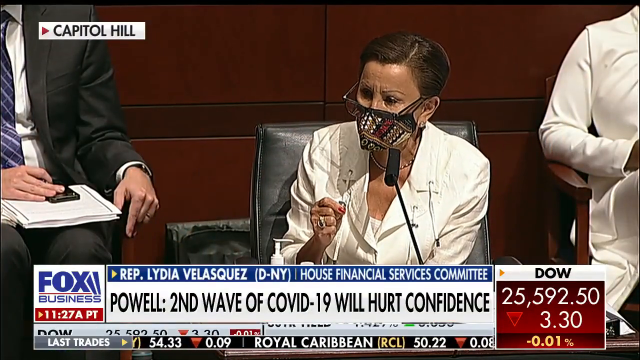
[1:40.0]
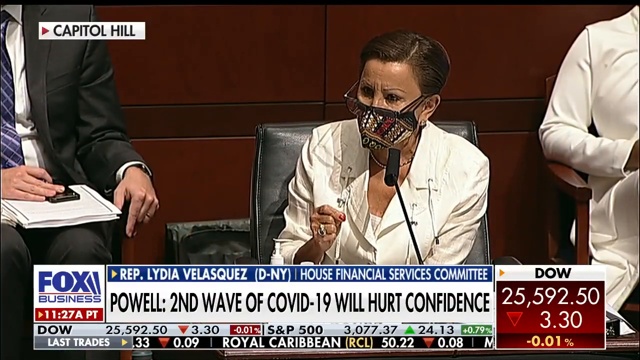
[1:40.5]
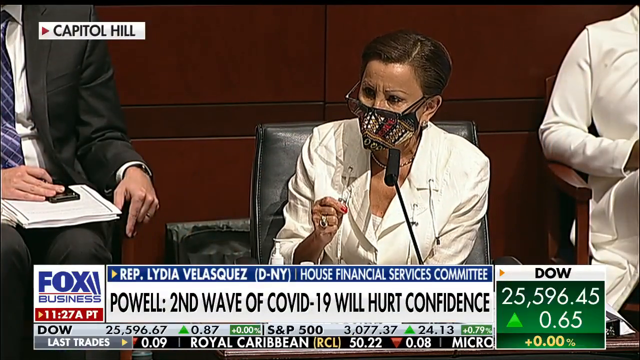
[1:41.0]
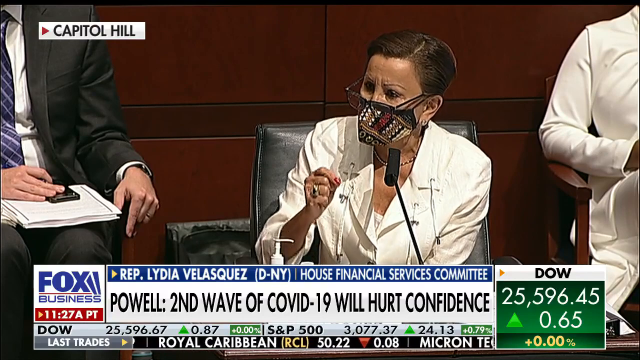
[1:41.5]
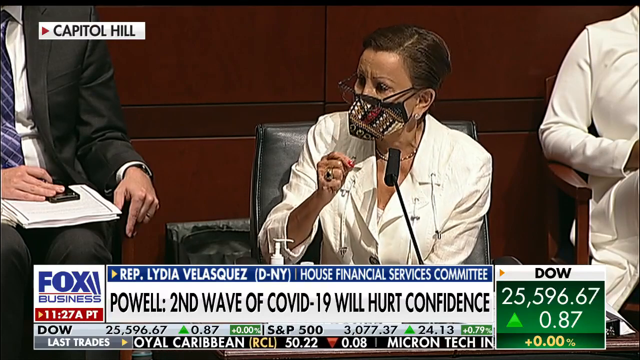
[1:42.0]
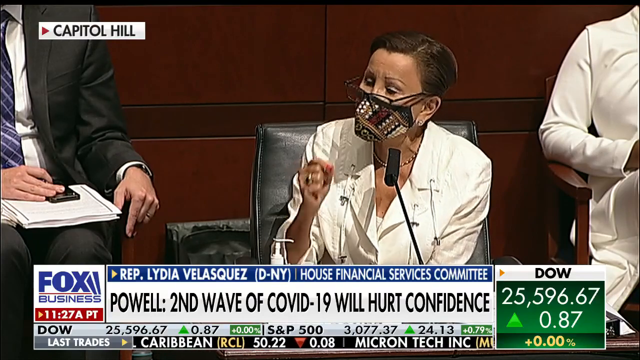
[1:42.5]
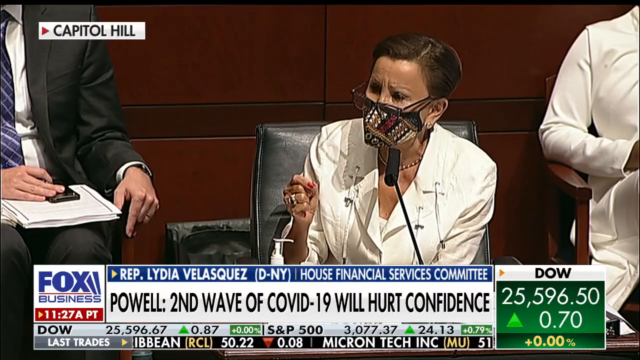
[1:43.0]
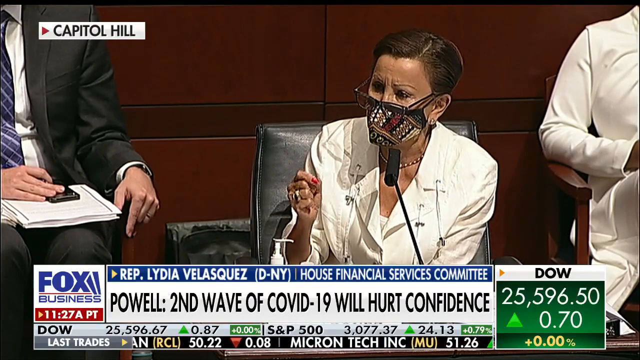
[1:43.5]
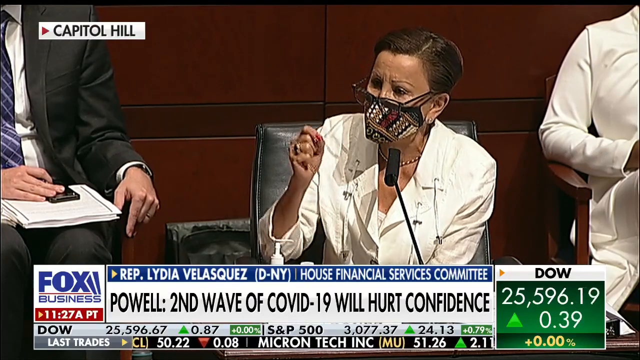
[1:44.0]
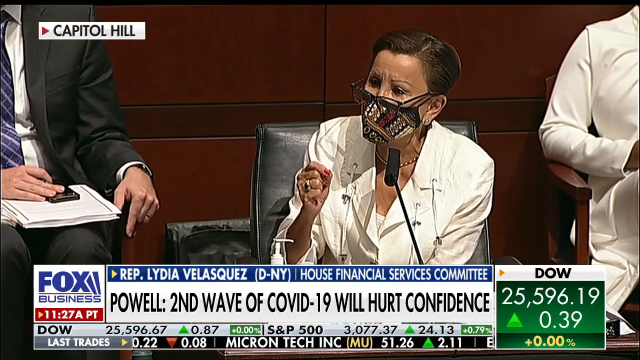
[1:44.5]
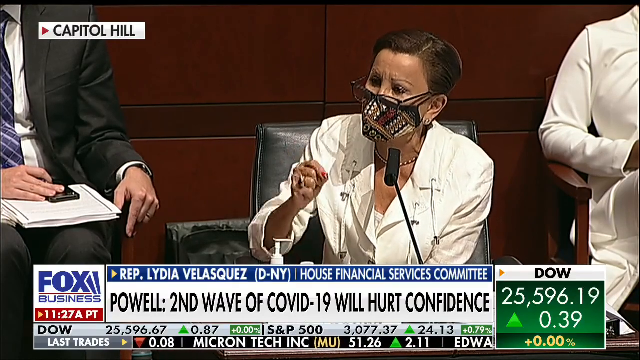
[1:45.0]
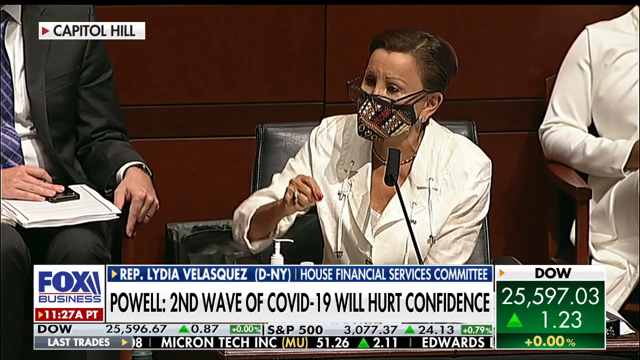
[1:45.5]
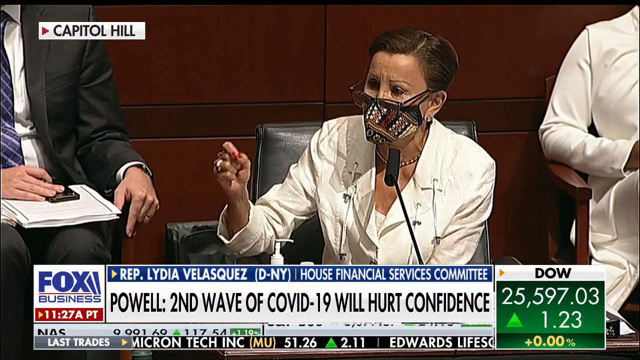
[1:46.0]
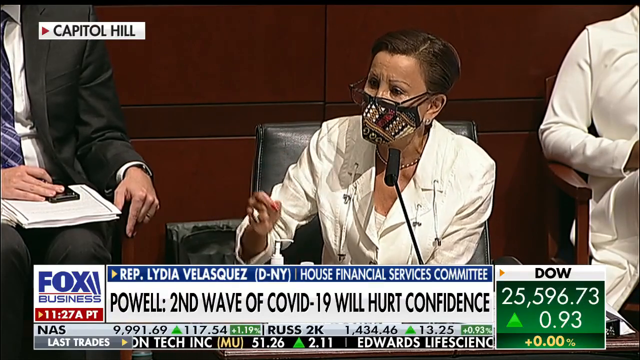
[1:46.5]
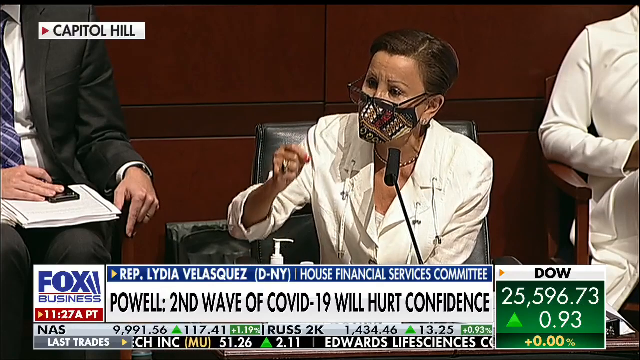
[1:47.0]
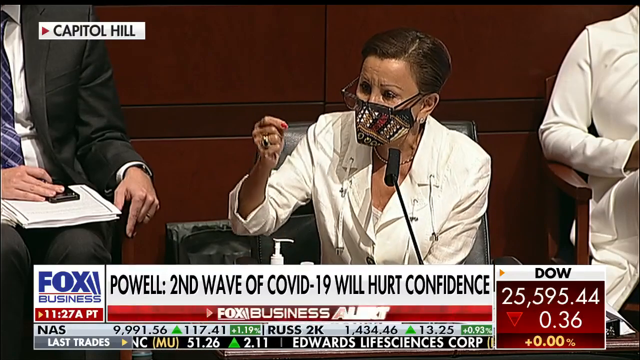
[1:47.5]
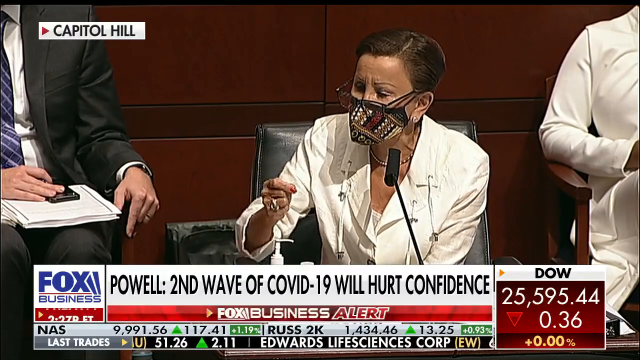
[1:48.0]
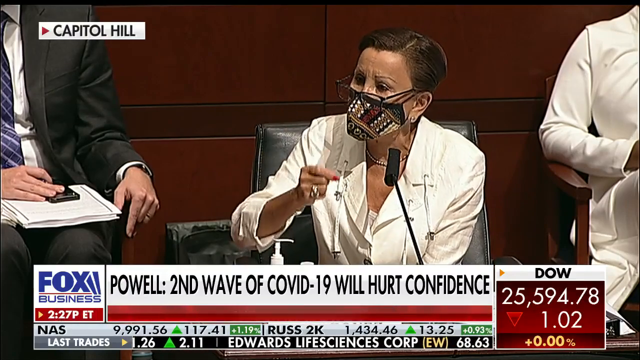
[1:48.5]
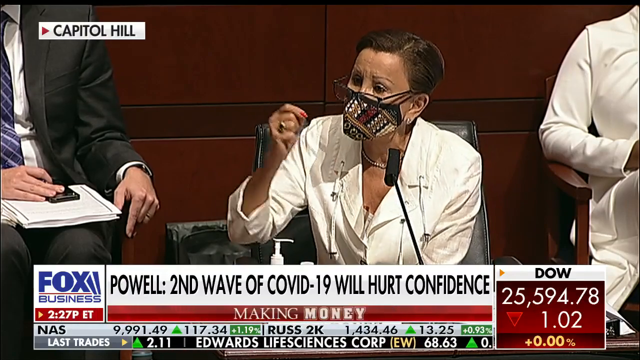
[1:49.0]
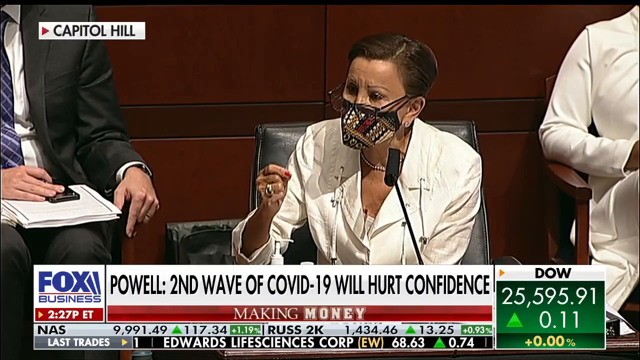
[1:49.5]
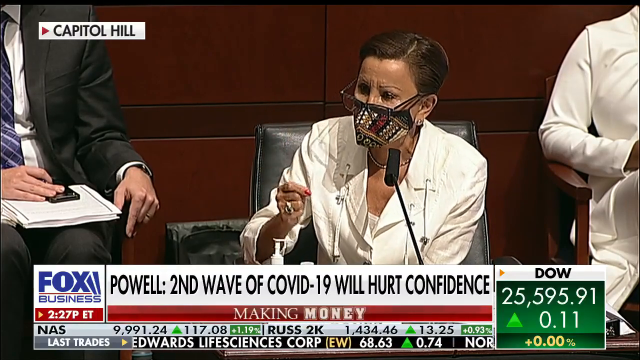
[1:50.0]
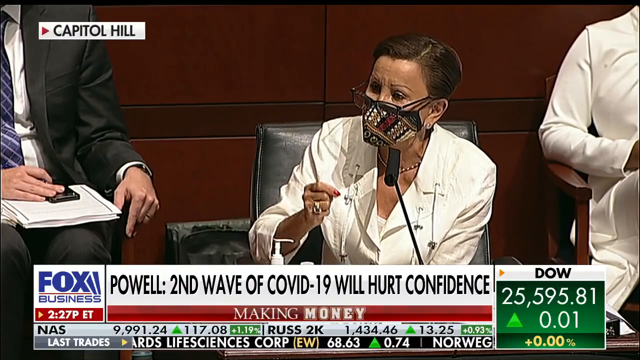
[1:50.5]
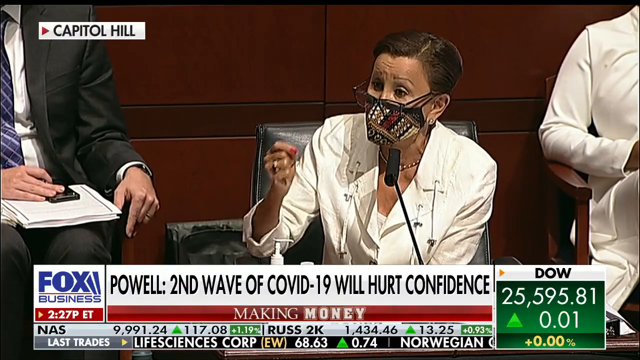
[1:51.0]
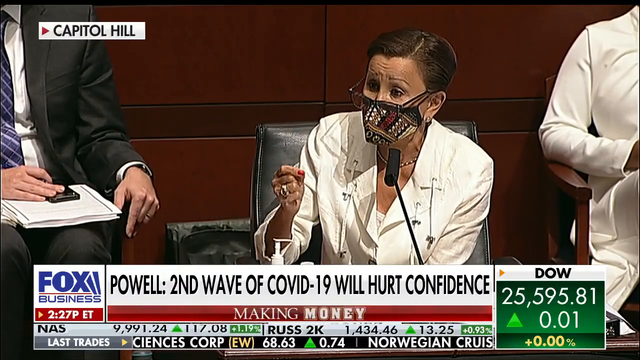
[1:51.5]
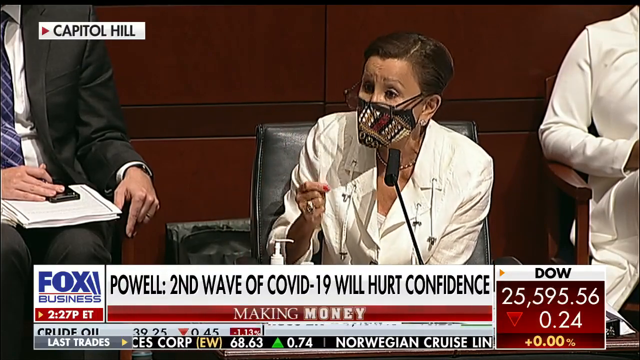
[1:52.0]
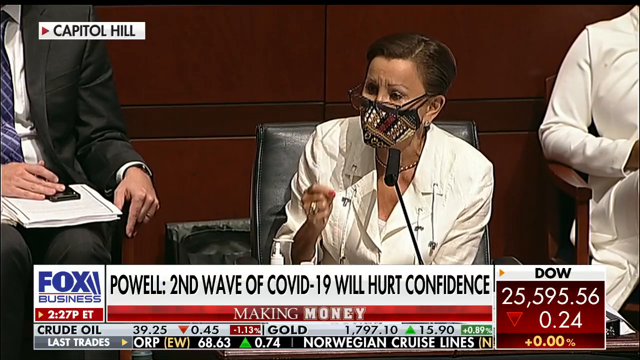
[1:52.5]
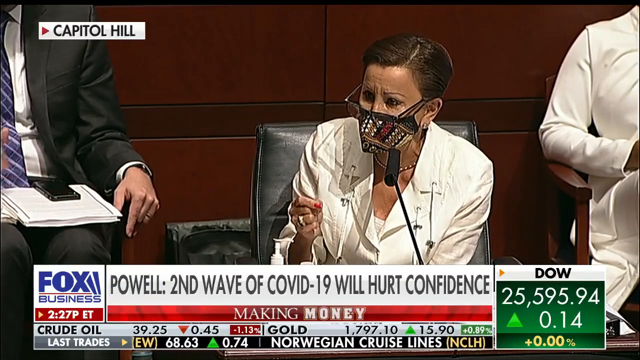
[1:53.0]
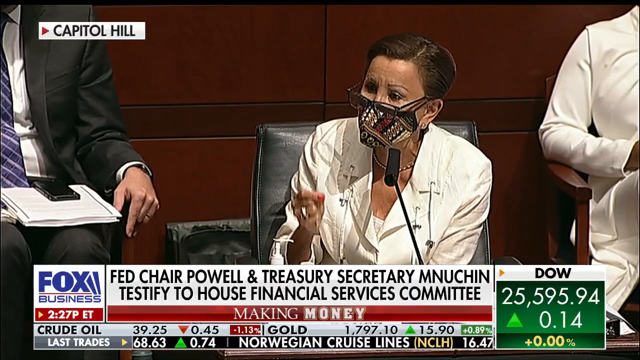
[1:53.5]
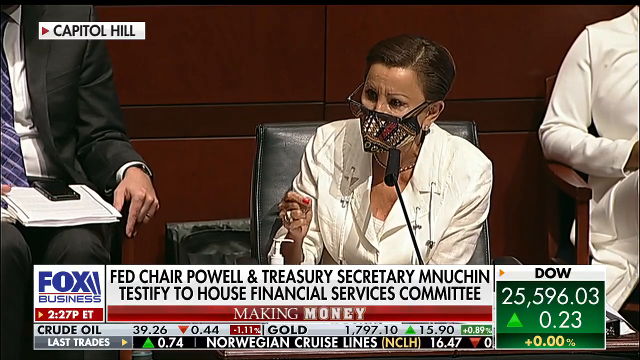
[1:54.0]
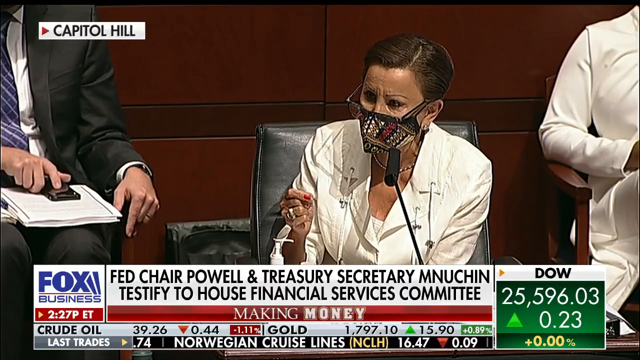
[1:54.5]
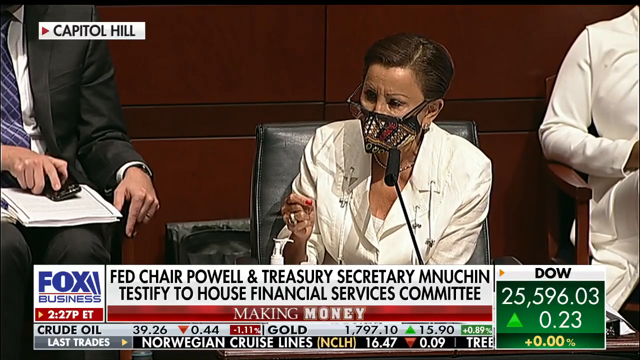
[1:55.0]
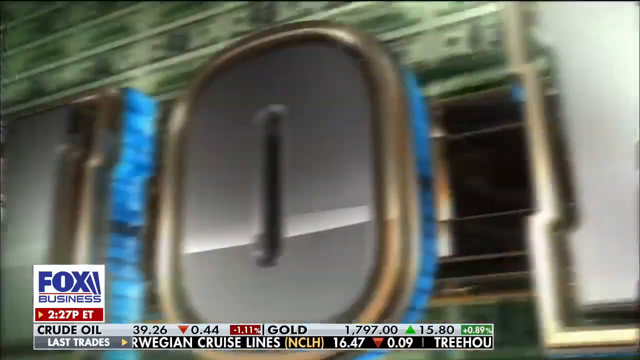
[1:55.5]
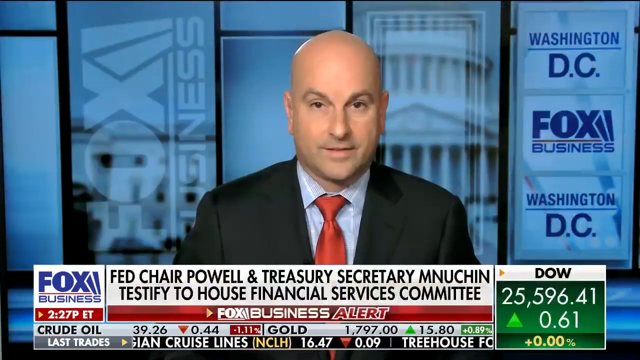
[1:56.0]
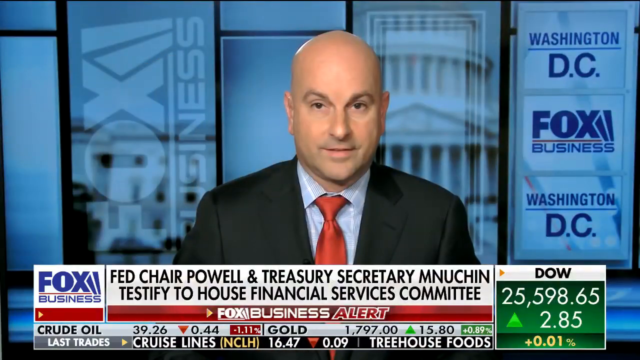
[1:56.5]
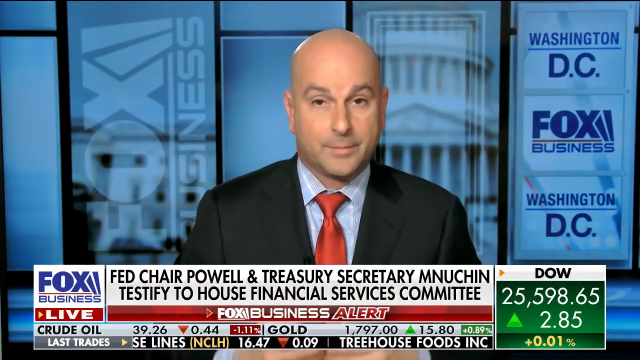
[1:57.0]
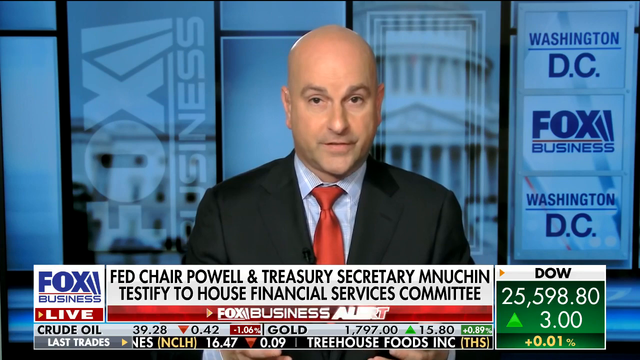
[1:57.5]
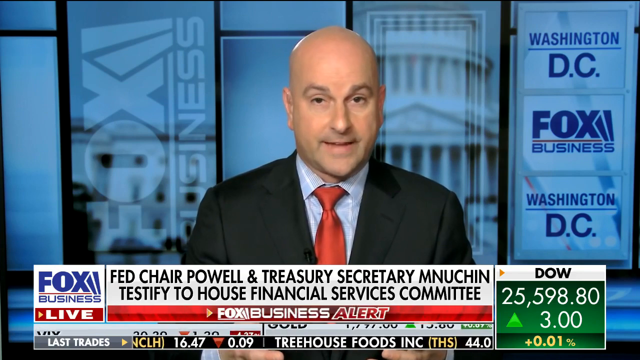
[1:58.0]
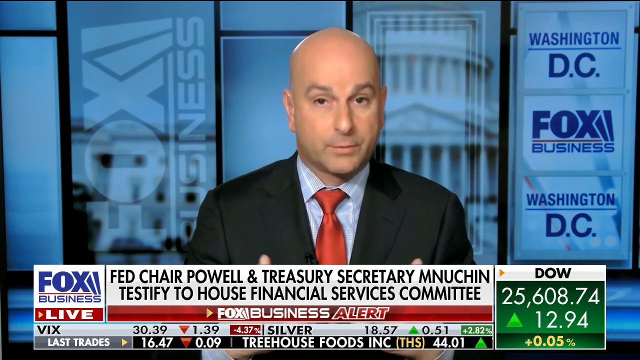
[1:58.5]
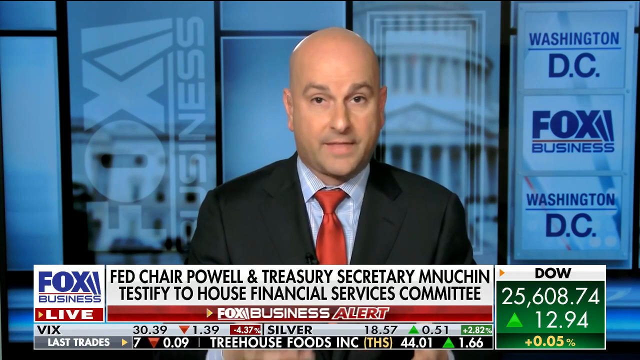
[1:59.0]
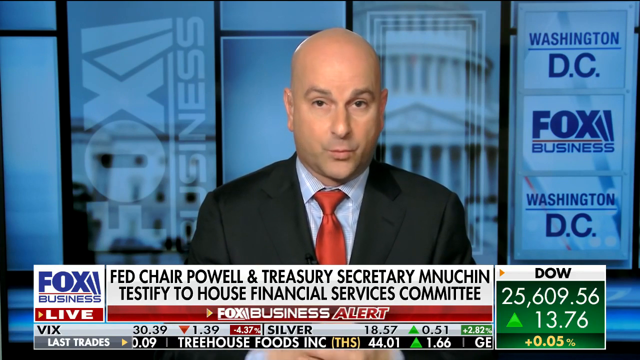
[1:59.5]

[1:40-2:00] A label reads "Representative Lydia Villasquez, DNY, House Financial Service Committee". The setting apparently is still Congress. The video transitions back to the main reporter, a bald white man in a black suit, red tie and white shirt; behind him are the words "Washington DC" and "Fox Business". The headline says "Fed Chair Powell and Treasury Secretary Mnuchin testified to House Financial Services Committee". The woman talks into a microphone, with rings on her fingers, moving her hands very vigorously and imposingly, seeming strong and confident in what she is saying.